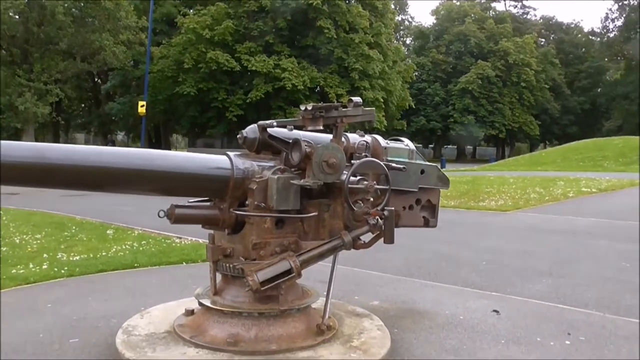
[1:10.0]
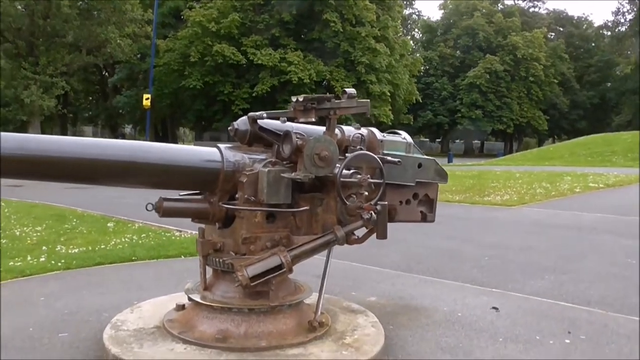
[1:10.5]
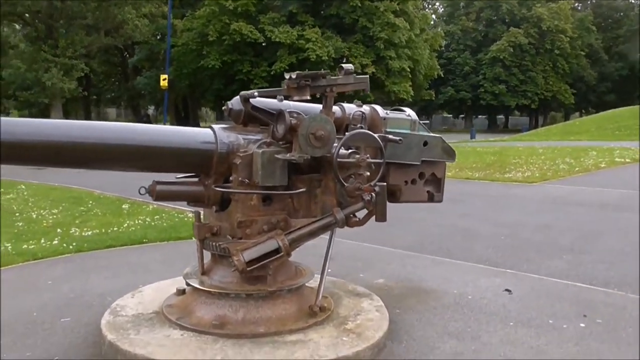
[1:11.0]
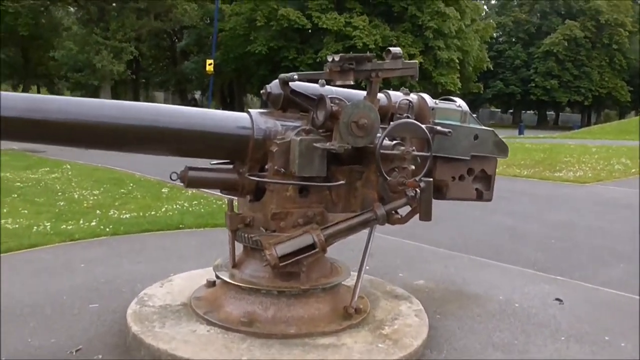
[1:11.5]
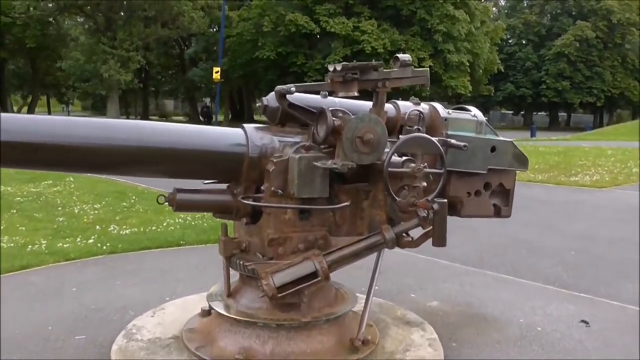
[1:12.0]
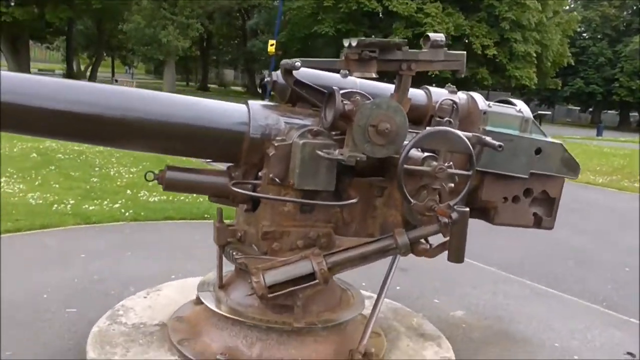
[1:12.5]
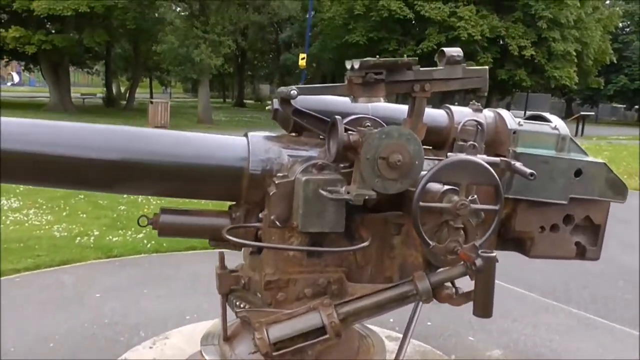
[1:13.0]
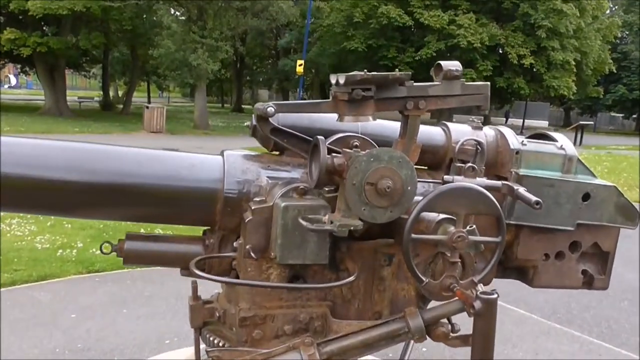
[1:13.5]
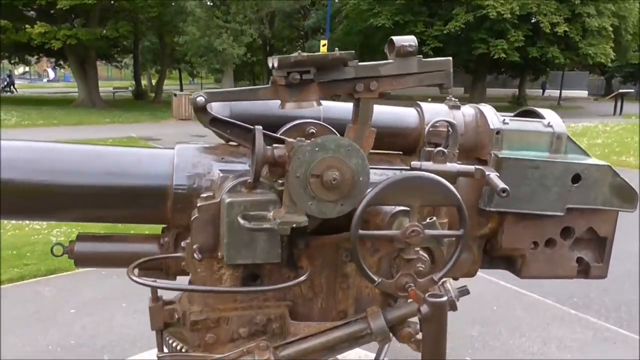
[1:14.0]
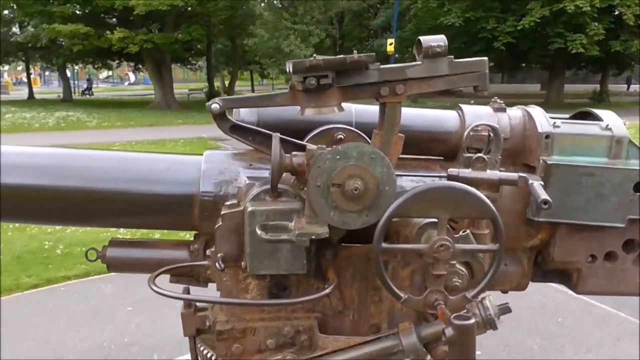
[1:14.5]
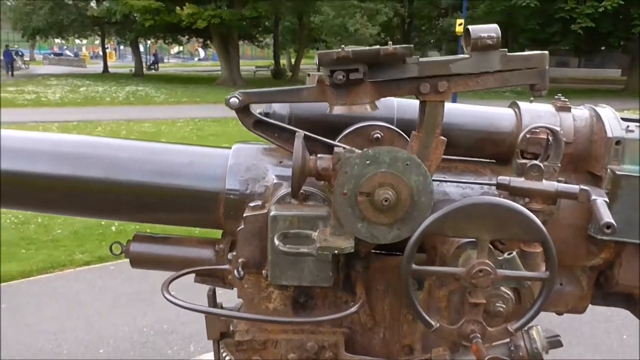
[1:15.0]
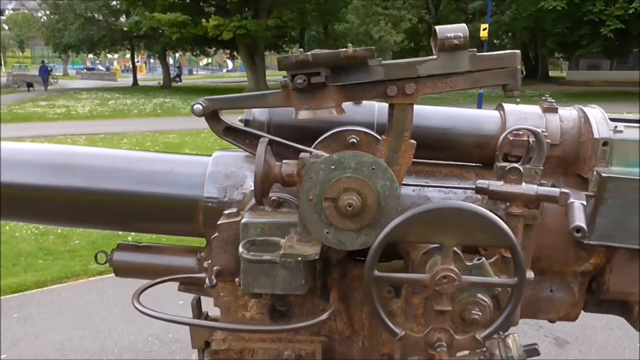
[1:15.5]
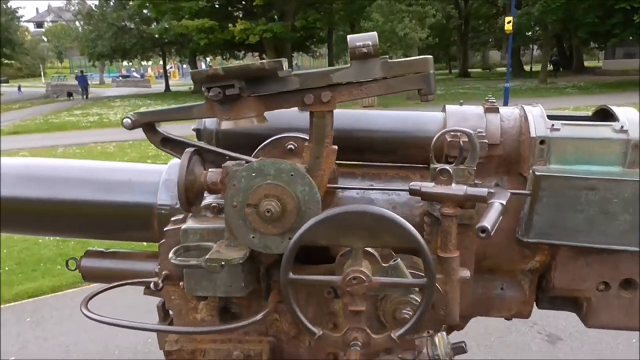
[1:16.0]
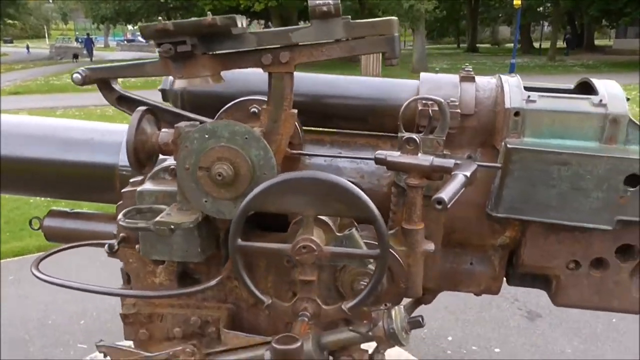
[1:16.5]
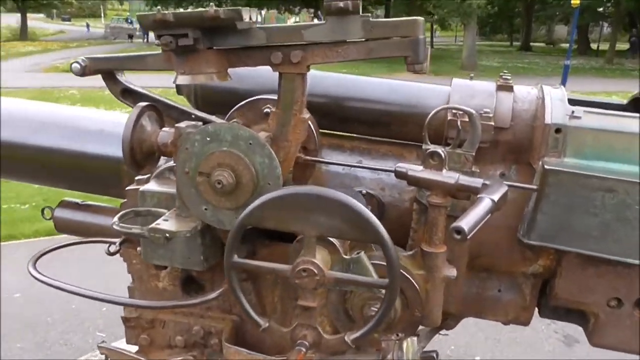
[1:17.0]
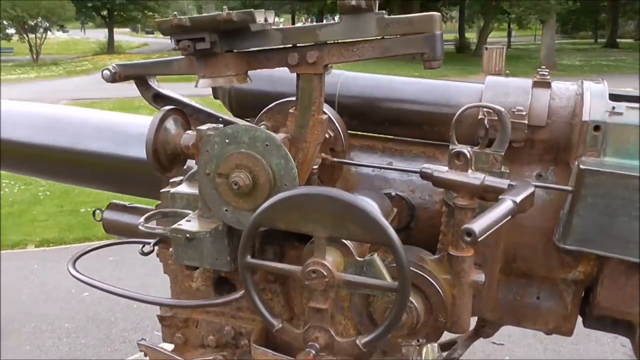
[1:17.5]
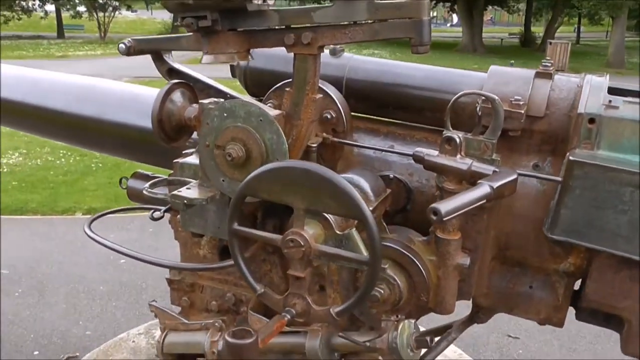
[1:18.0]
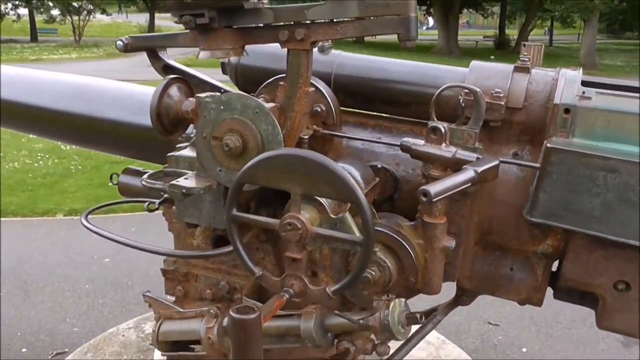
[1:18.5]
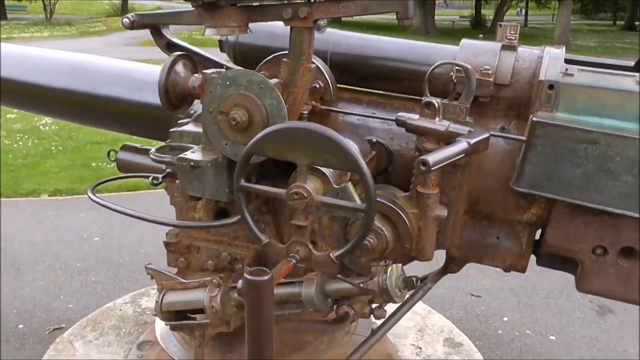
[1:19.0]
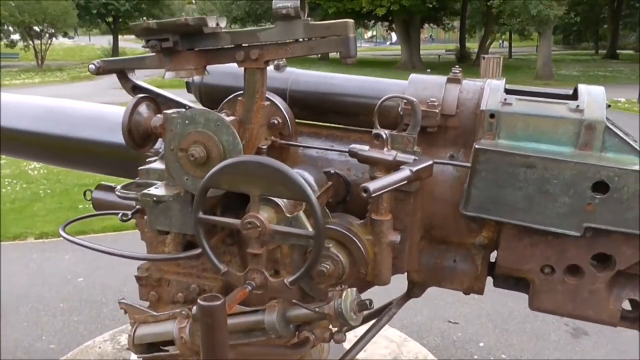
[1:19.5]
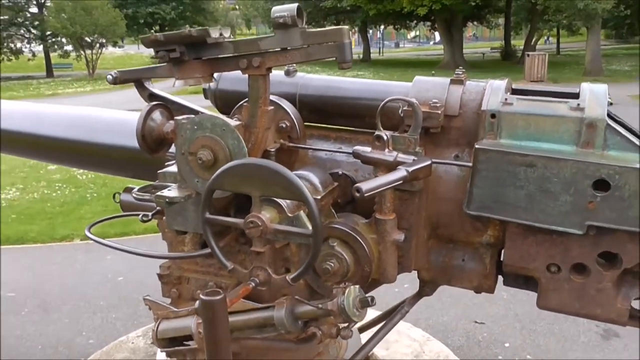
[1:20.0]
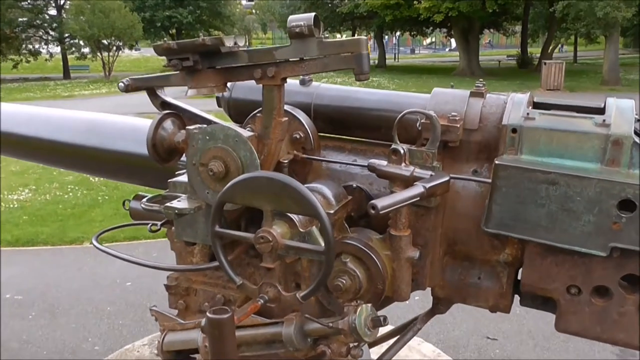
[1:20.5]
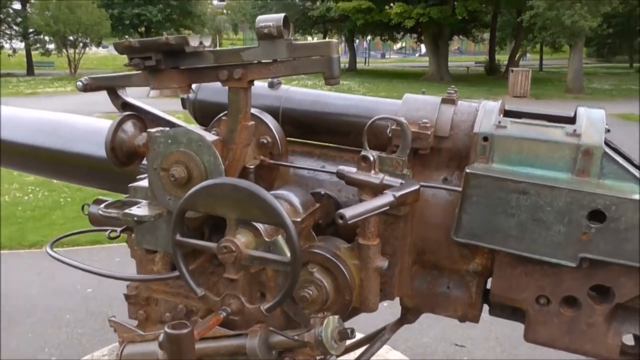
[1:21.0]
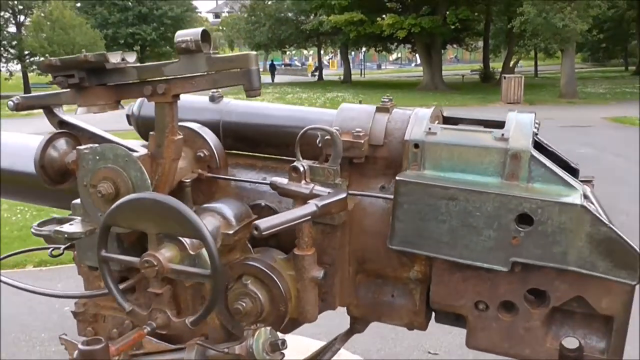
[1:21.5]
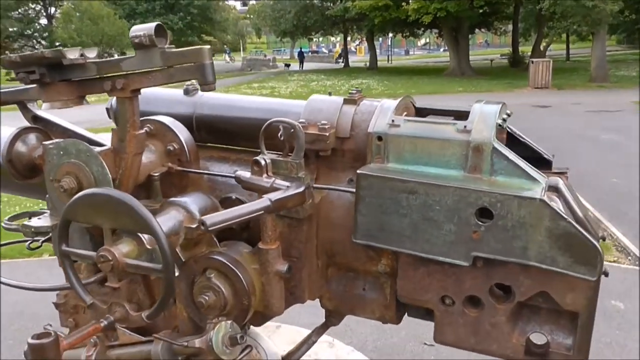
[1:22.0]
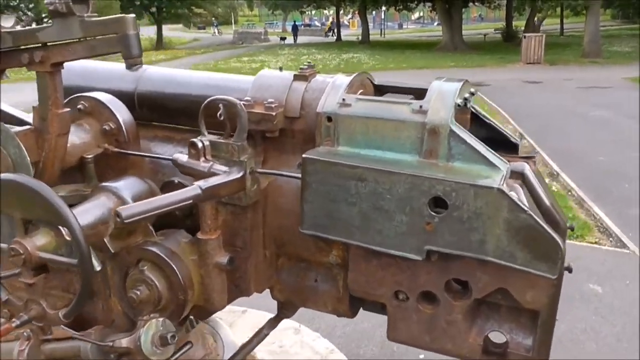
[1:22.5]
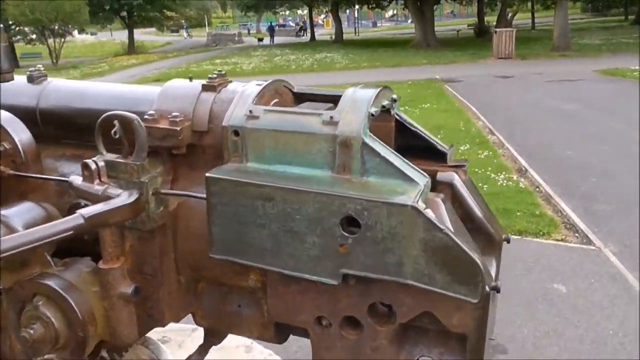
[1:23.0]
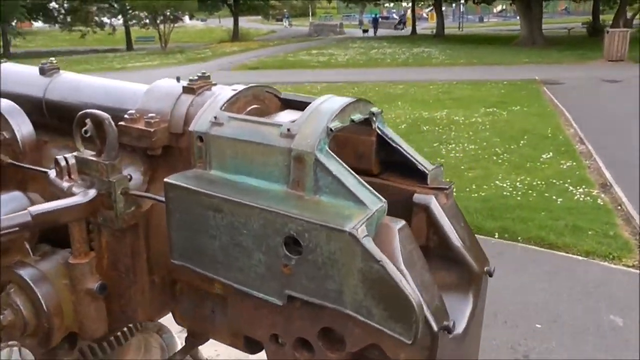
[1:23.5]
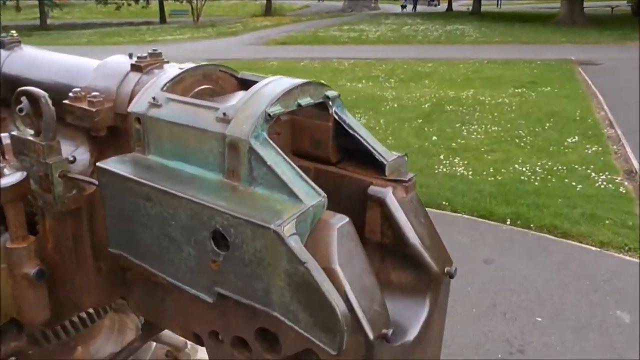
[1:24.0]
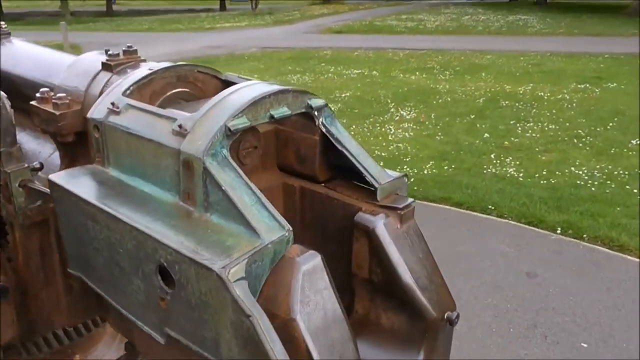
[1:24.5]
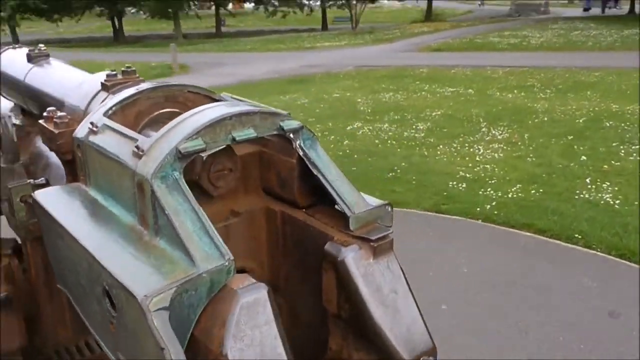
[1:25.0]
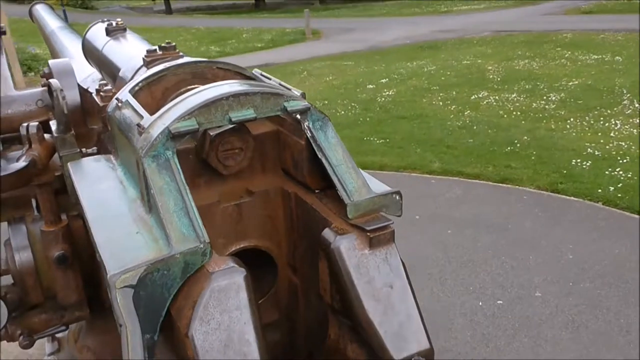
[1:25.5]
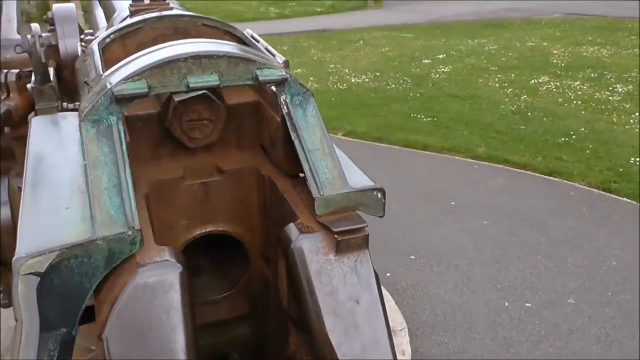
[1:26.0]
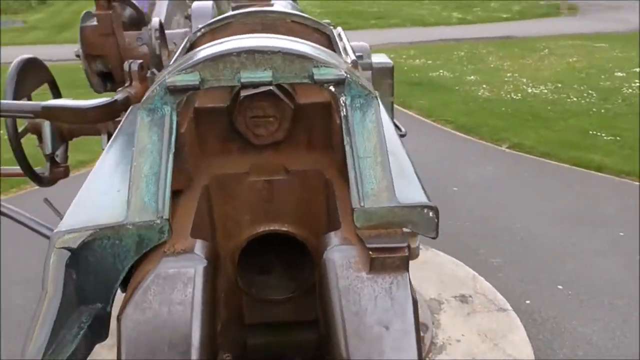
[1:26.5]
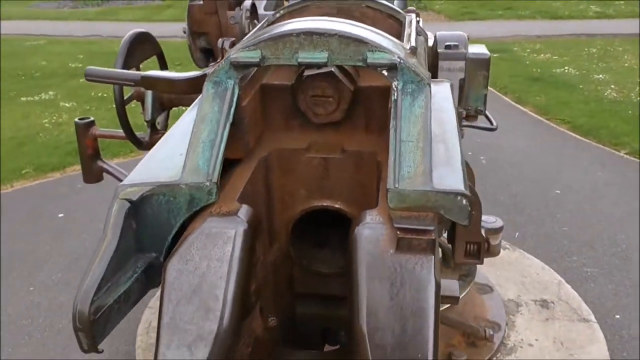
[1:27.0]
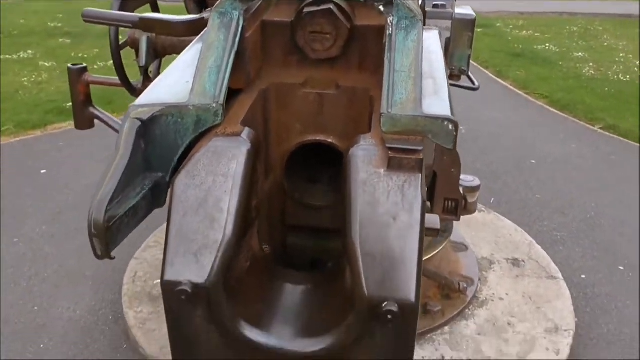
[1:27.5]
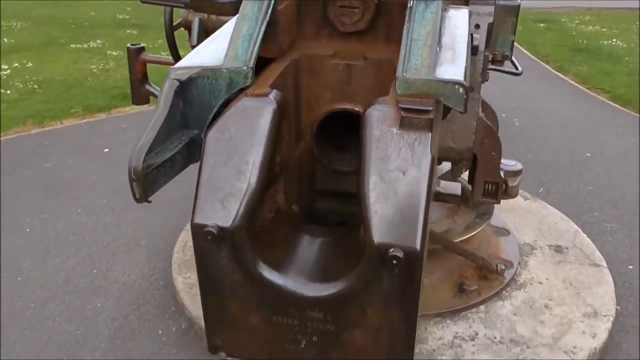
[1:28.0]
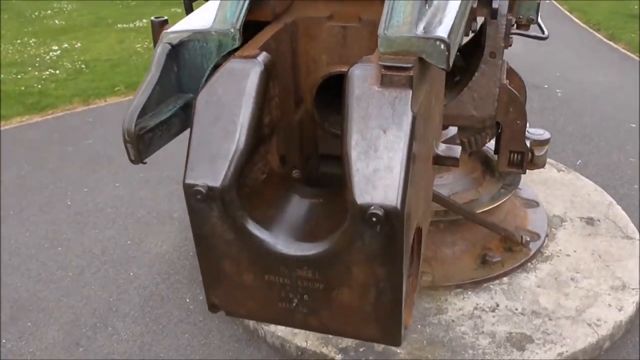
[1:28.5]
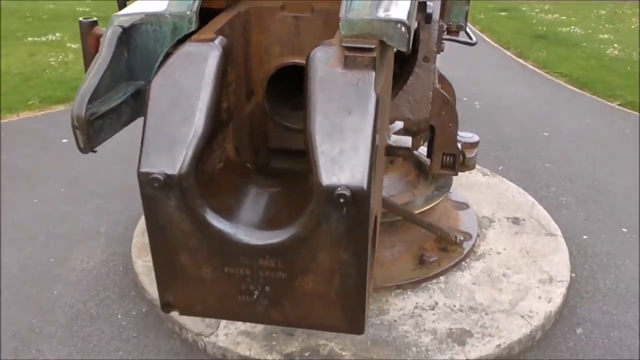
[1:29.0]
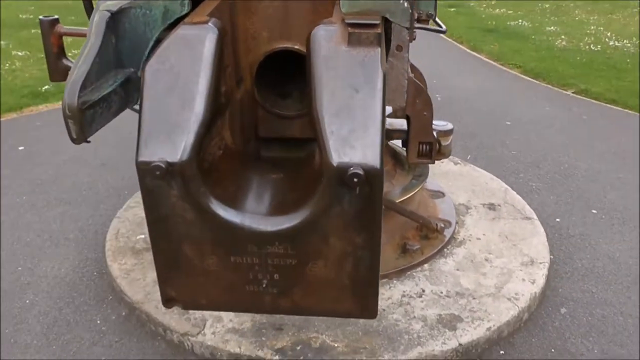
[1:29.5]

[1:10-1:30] In an outdoor park, an artillery gun is mounted as part of a monument. The camera is close to the side of the gun, showing what looks like a scope on top and a dial or wheel on the side. In this light the metal looks lighter, almost copper or bronze. There is another wheel on the side. The camera moves around behind the gun, where a handle sticks out, and then to the back of the gun, which has a channel for inserting the artillery and a hole in the back. The camera pans down to the bottom at the back of the gun. The surrounding park has lawns with white wildflowers, many trees around the edges, and paved walkways leading throughout. The gun itself is in the center of a circular patch of pavement.